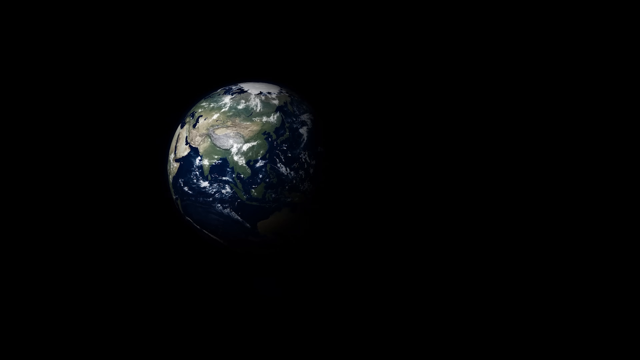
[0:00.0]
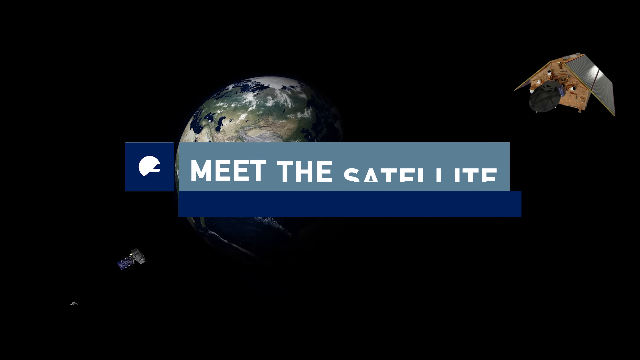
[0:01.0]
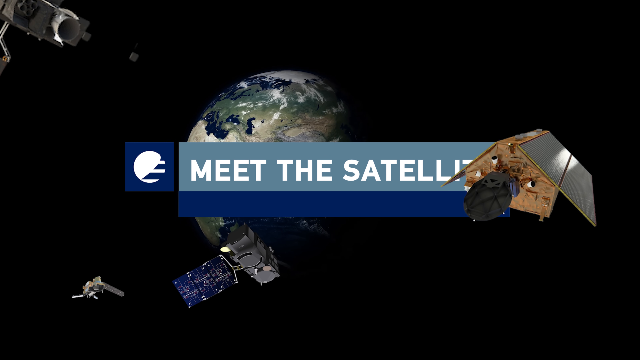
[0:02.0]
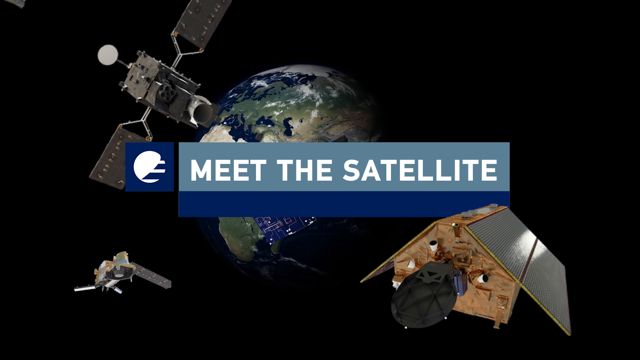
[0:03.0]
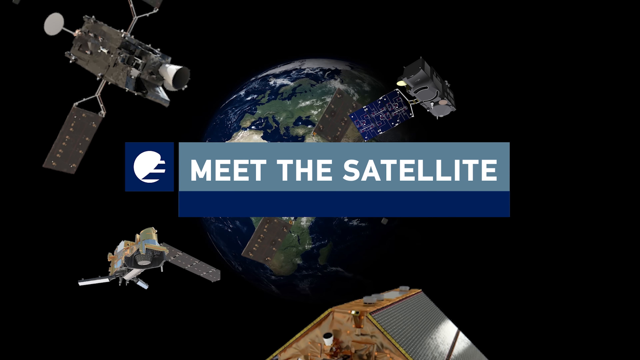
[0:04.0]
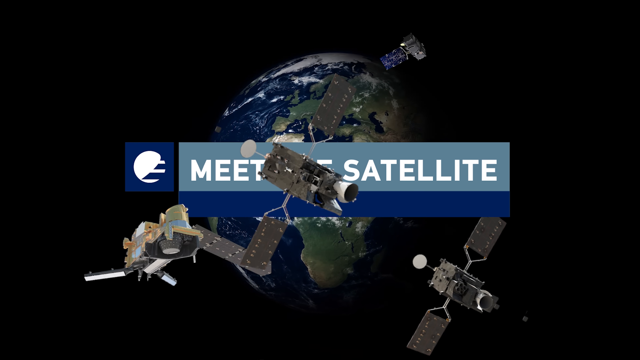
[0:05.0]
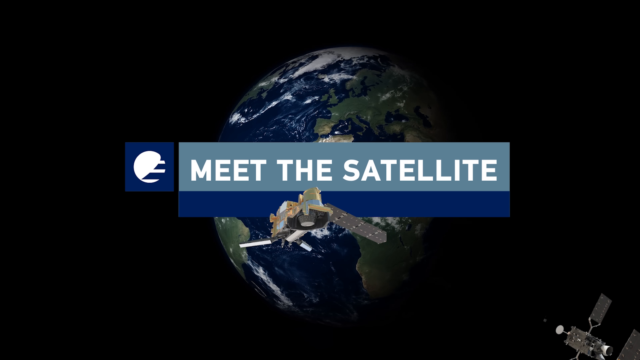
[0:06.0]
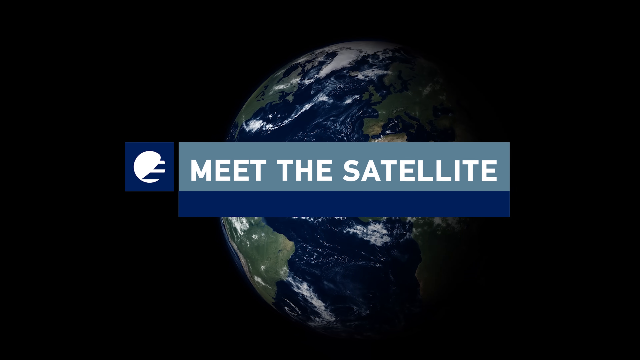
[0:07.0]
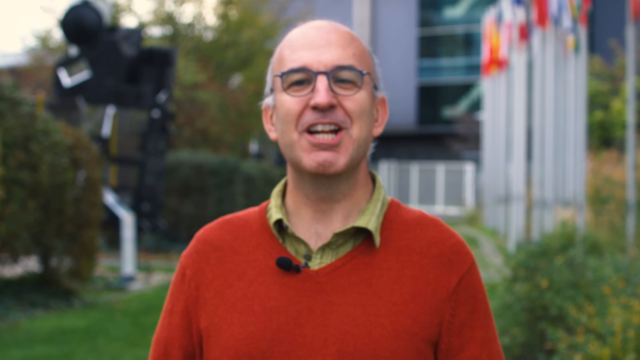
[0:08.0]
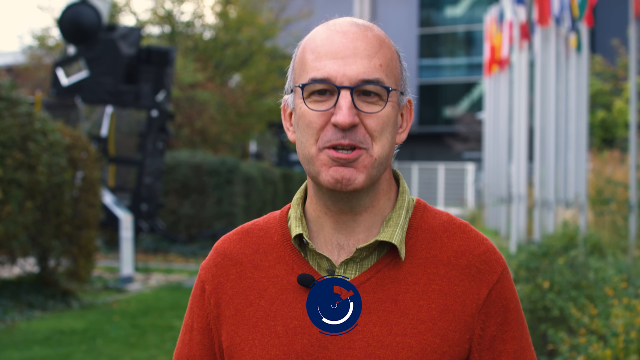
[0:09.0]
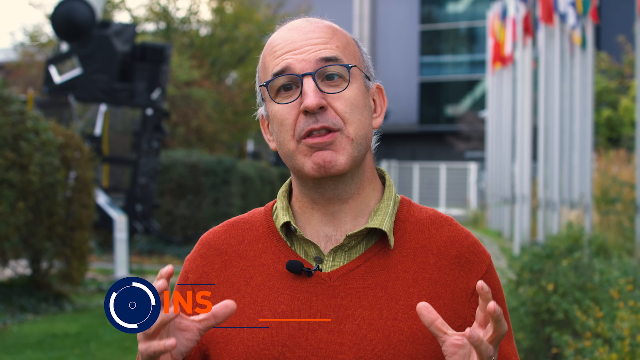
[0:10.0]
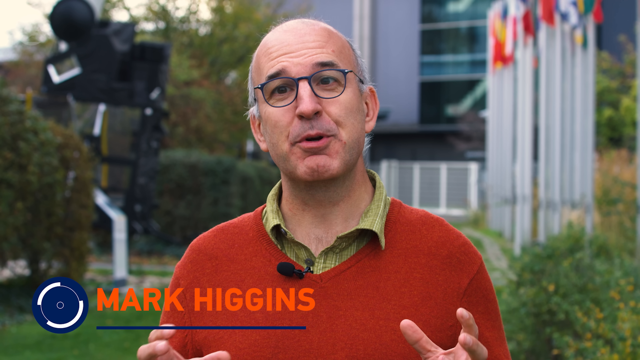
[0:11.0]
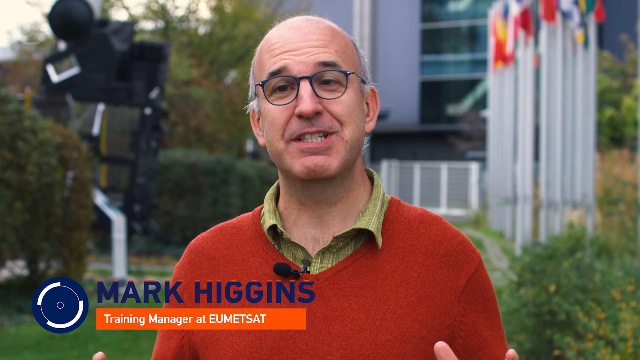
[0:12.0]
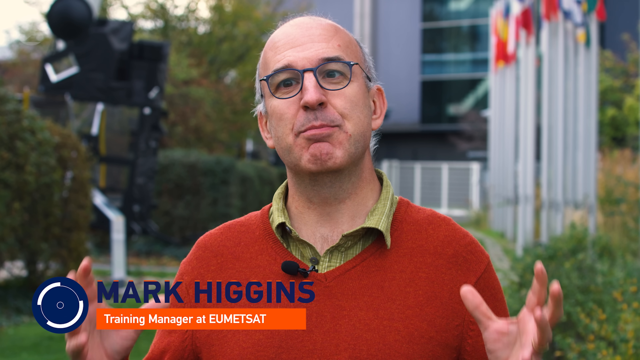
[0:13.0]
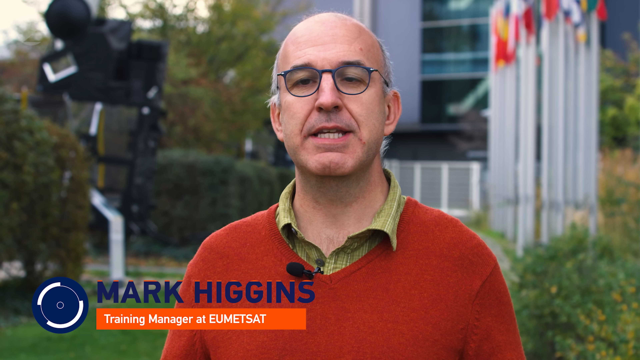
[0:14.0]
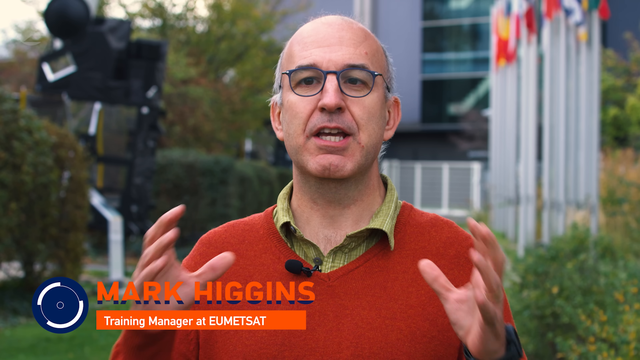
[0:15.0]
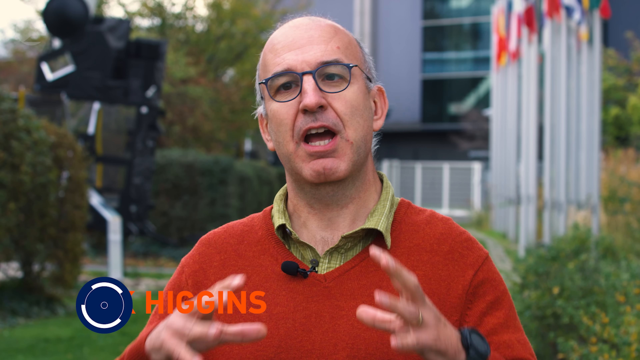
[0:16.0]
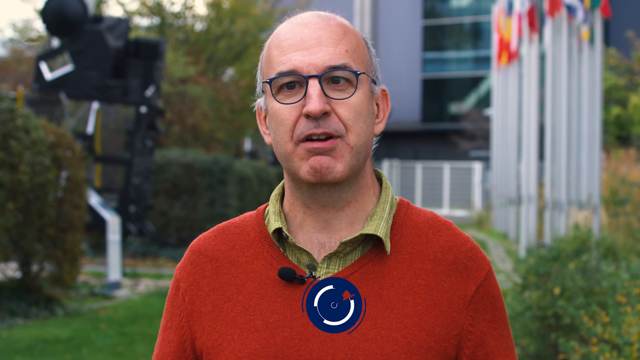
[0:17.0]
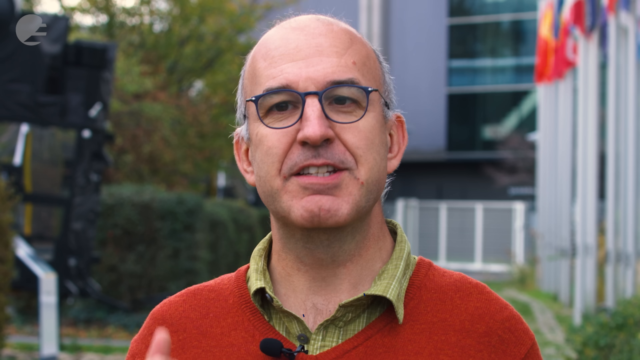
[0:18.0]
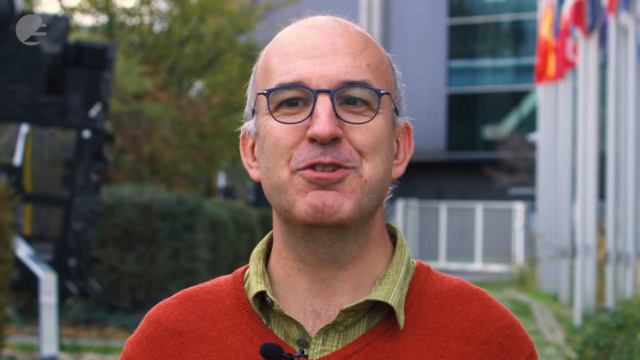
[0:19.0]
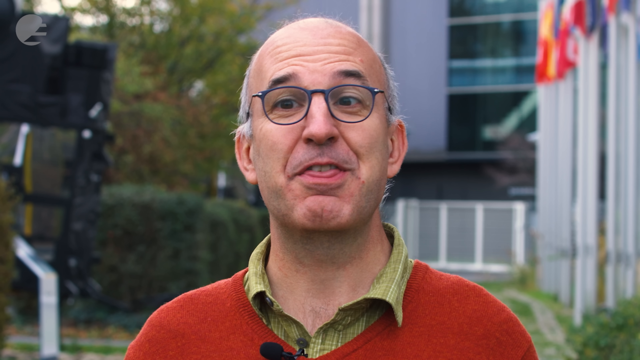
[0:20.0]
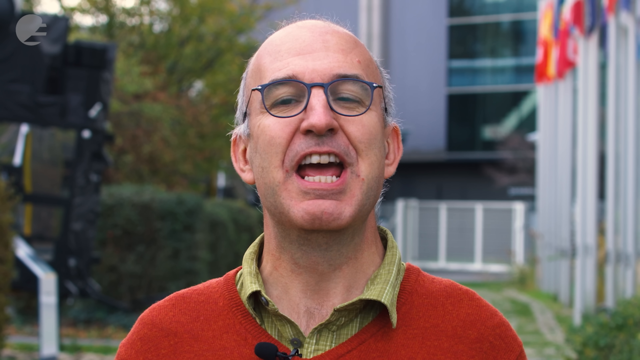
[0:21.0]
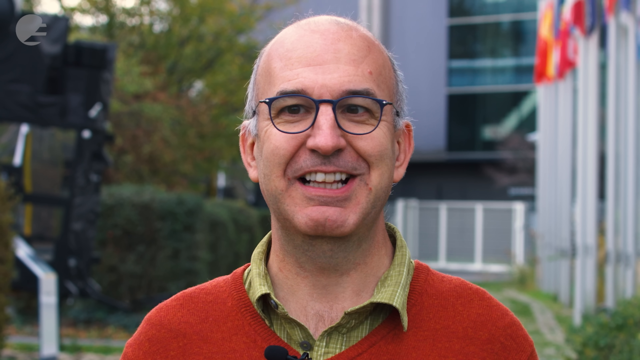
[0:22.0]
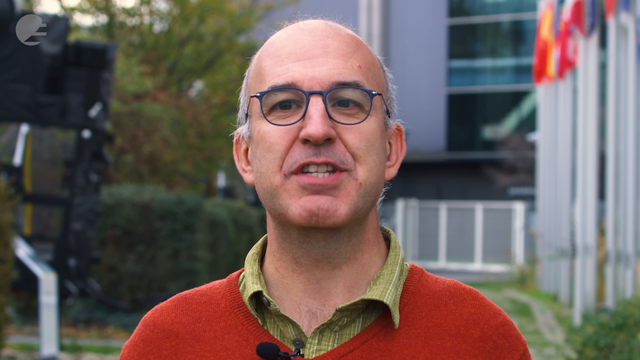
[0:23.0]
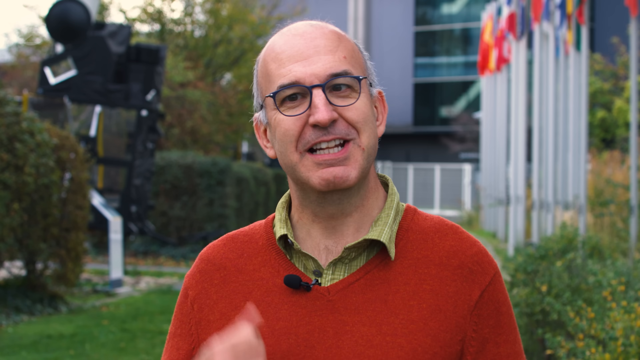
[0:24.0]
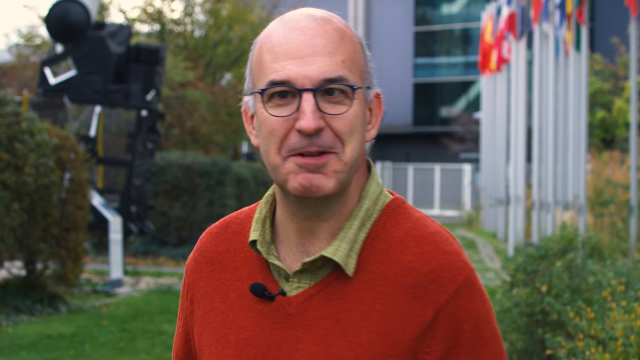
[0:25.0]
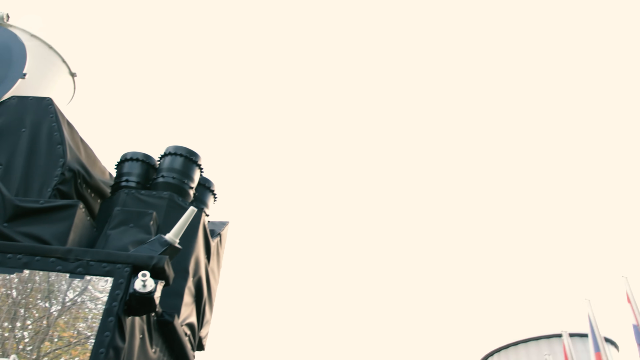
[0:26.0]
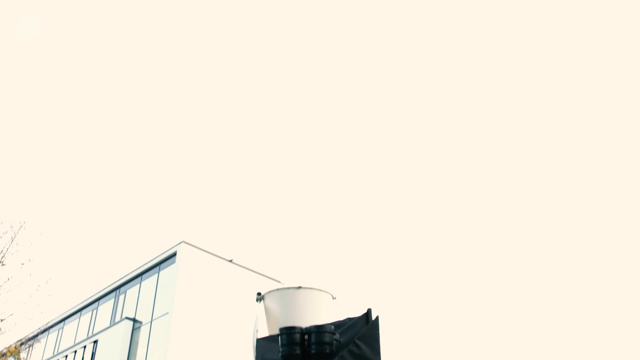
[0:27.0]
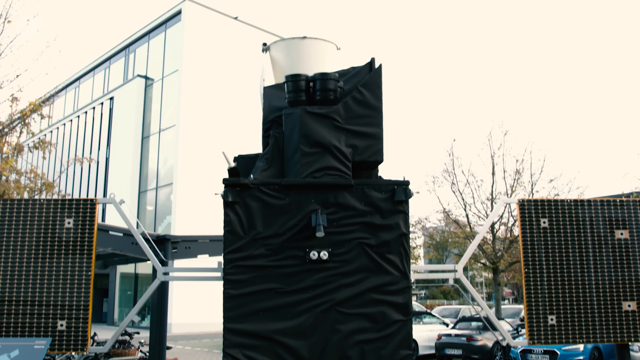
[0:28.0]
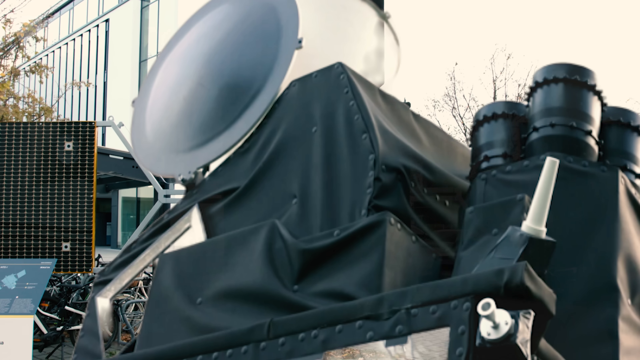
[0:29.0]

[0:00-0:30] A picture of the Earth spinning, which looks like it is taken from outer space, appears with the text "meet the satellite" in white bold letters on a gray background, with a blue highlight strip underneath and to the left. Images of satellites come in: one in the top left corner is gray with two arms protruding up and down from it, a somewhat nondescript one is in the bottom left-hand corner, another is in the bottom right-hand corner, and others are sort of zooming in and around. The text disappears off the screen and a man talks to the camera. He wears a green collared shirt, a bright red V-neck sweater and glasses, and he moves his hands around as he talks. A label comes up that says "Mark Higgins, training manager at EUMETSAT". The background is a bit blurry, but there appear to be some flagpoles on the right side of the image and a building with some windows behind him. He starts to walk away, and images of different satellites come in. Something covered by a black tarp and some other objects are quickly shown.